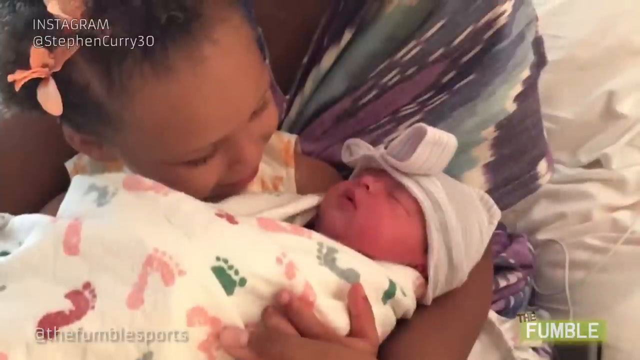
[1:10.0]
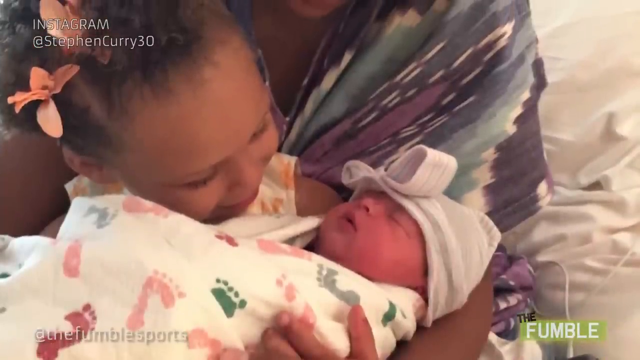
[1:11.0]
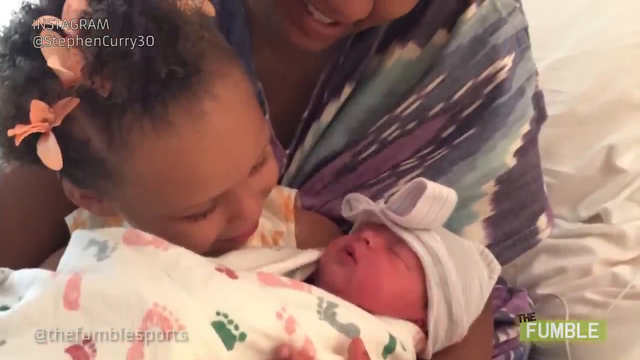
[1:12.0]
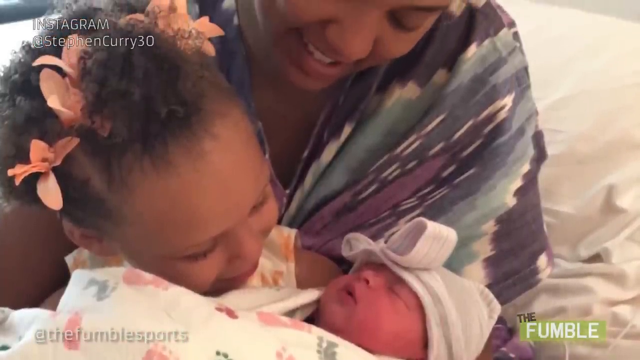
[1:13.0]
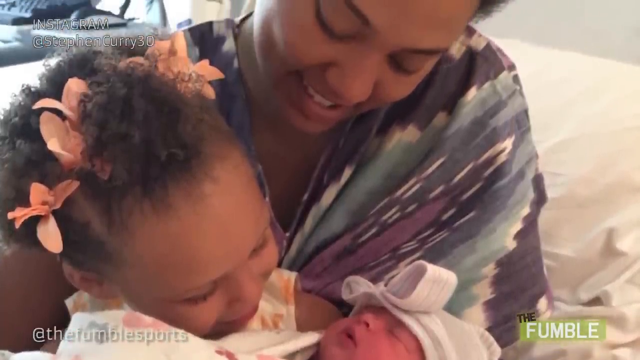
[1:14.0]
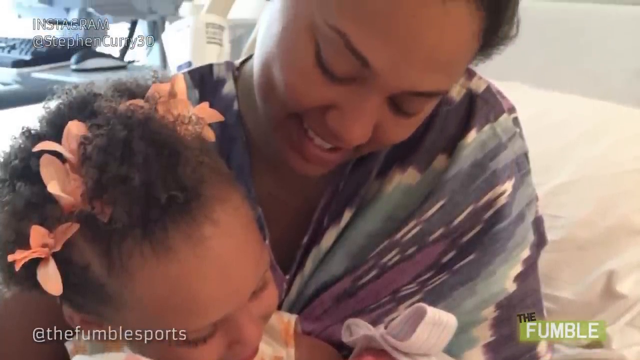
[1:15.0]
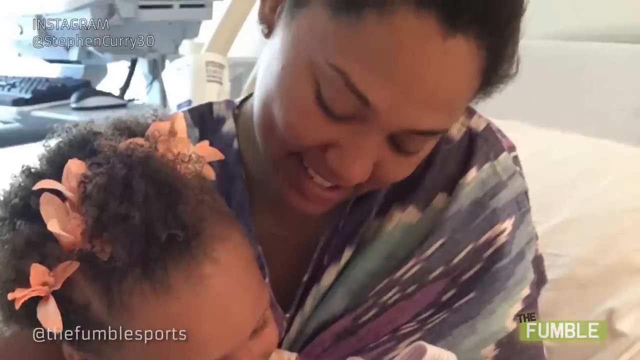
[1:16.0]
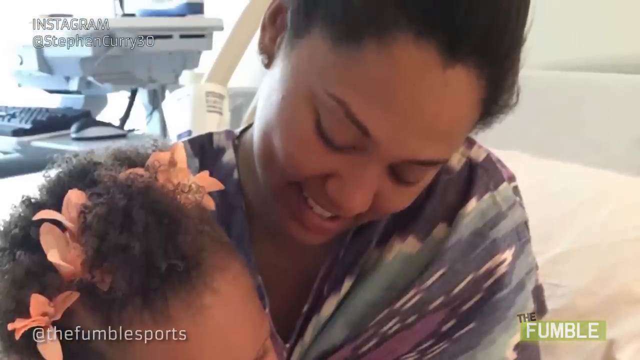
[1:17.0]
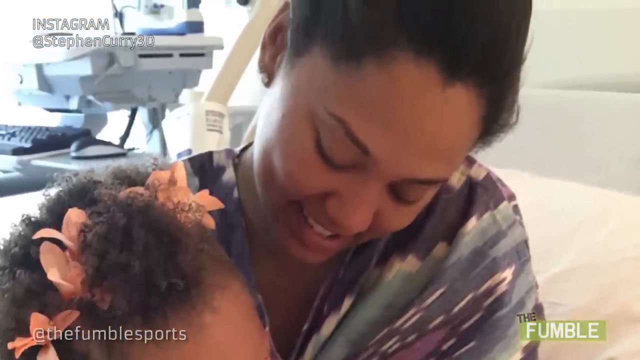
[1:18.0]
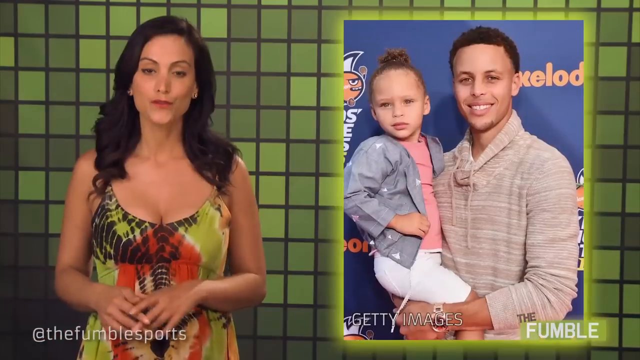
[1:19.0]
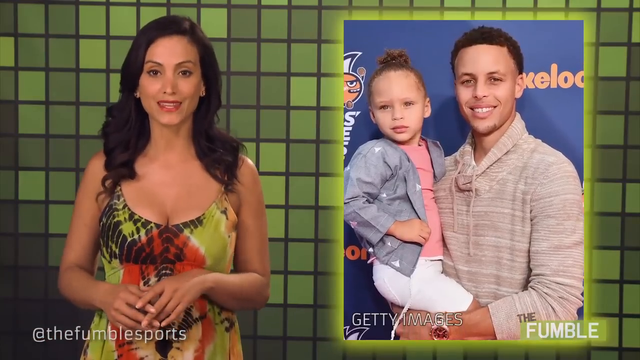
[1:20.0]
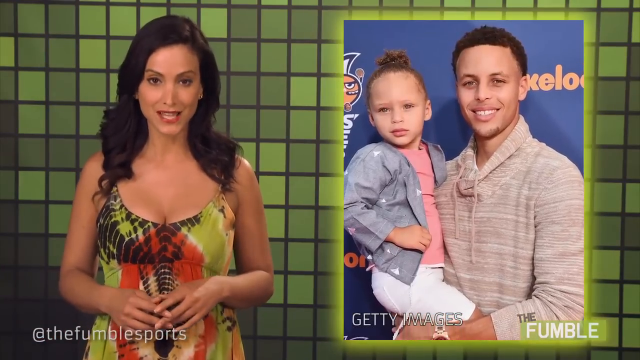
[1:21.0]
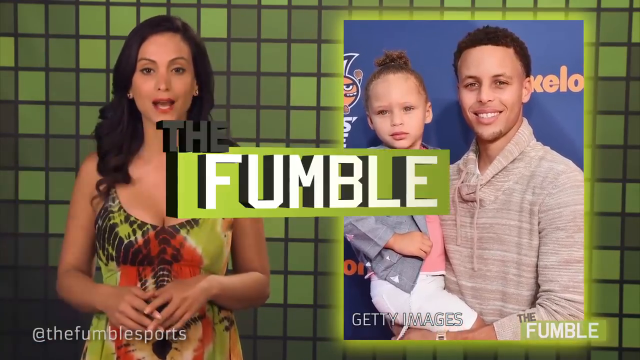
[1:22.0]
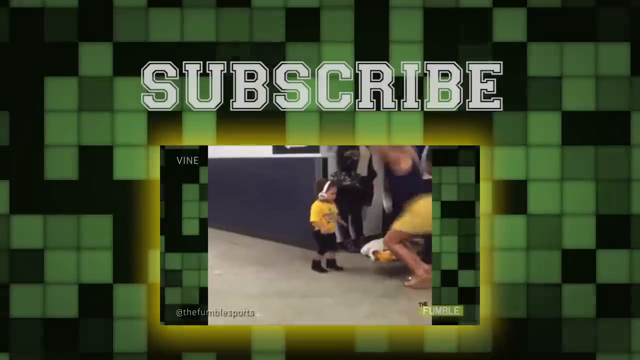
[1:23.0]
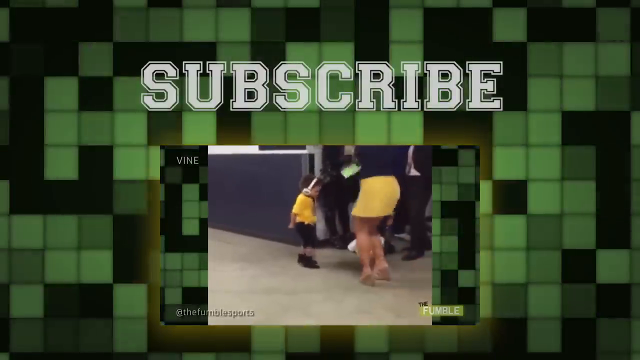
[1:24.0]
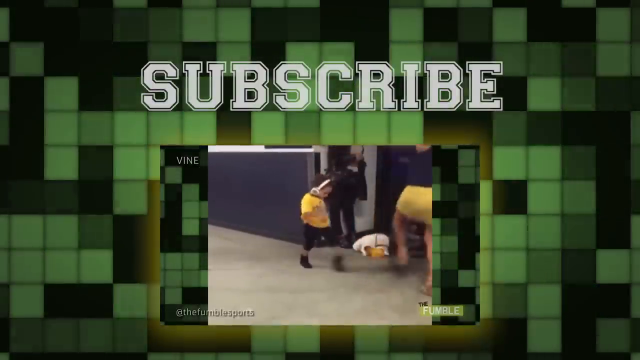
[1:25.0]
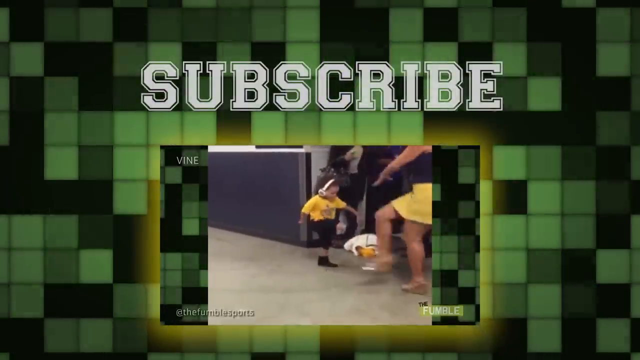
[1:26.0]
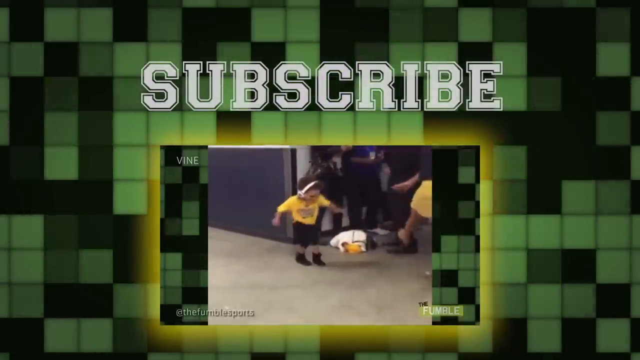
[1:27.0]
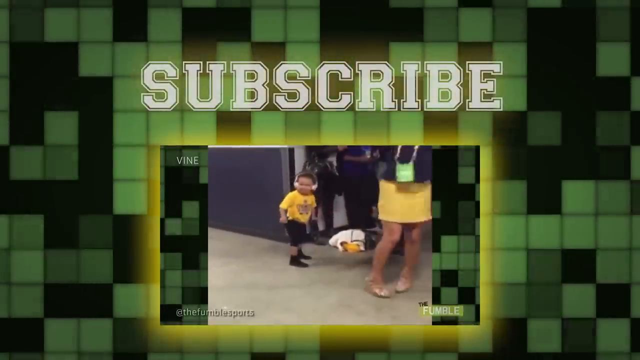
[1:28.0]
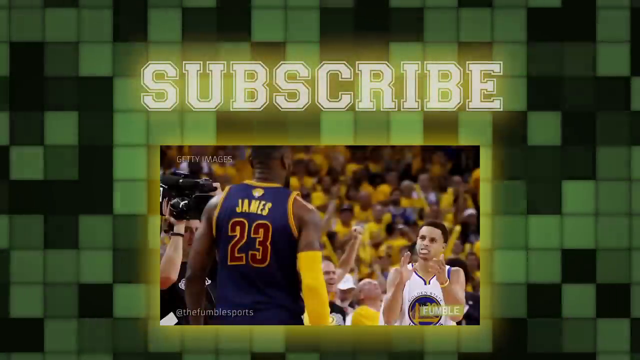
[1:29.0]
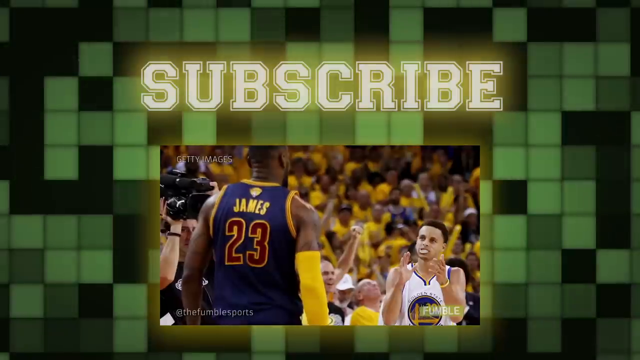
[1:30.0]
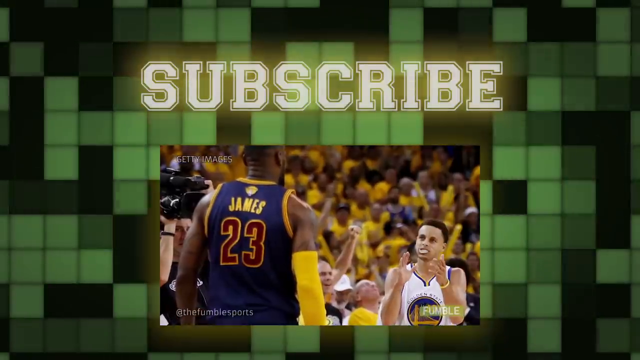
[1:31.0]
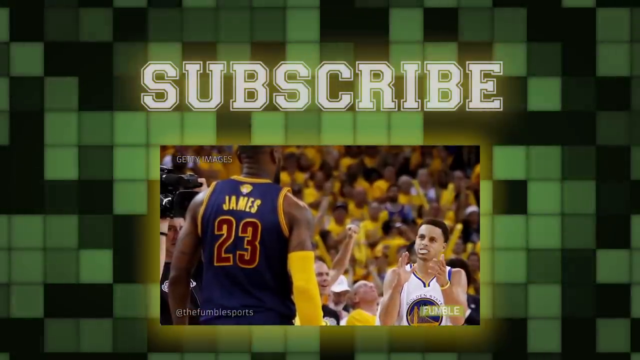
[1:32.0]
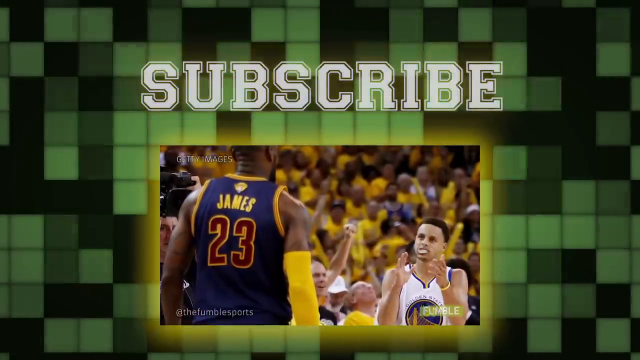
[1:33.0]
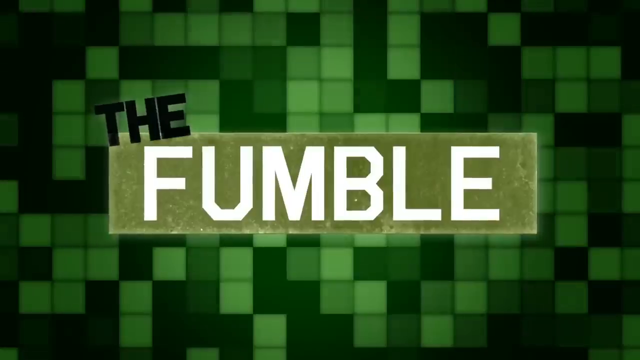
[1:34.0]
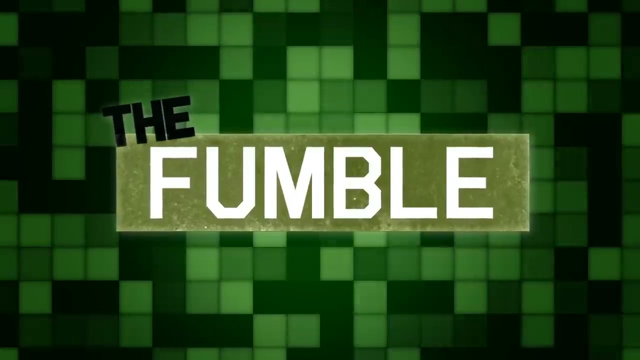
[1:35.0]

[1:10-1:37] A still photo shows a little girl holding a newborn baby; the upper left corner says "Instagram at StephenCurry30." Behind the little girl is what appears to be a woman, presumably the mother, embracing the little girl and the baby. The camera pans up from the lower portion of the photo. Then a live video of a newscast appears, with a green checkered background and a woman speaking directly into the camera. Beside it is a photo of the man, presumably Stephen Curry, holding a young girl; they are smiling and posing outside a large banner that says "Nickelodeon," so he apparently was at some type of Nickelodeon program. The name of the newscast, "The Fumble," comes onto the screen in a computerized font, followed by text that says "subscribe."